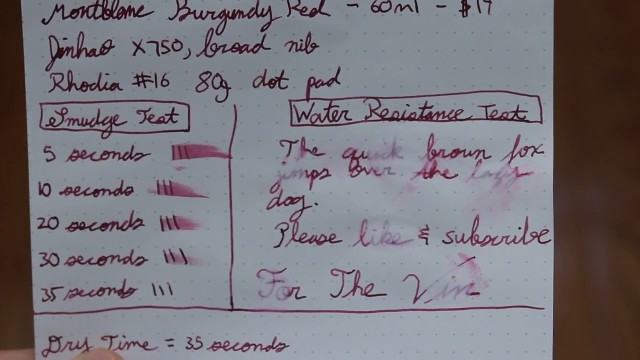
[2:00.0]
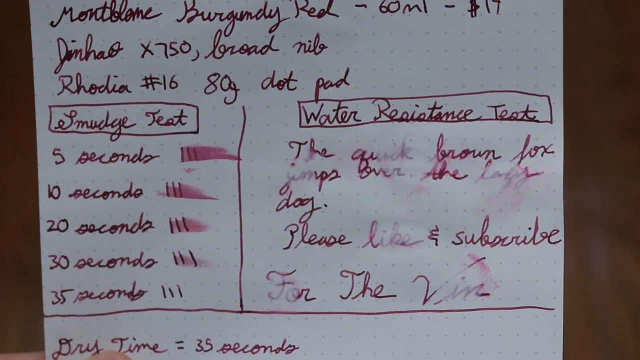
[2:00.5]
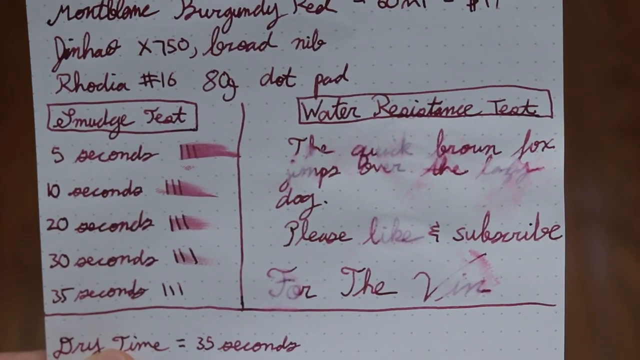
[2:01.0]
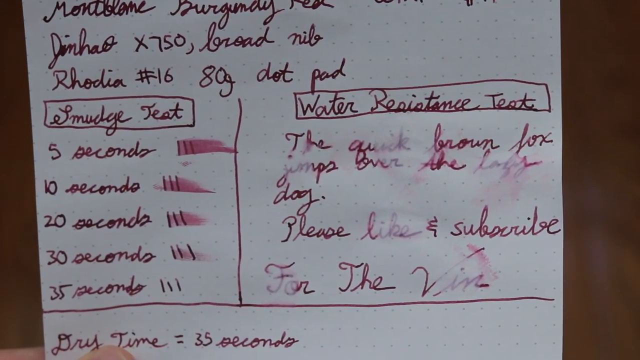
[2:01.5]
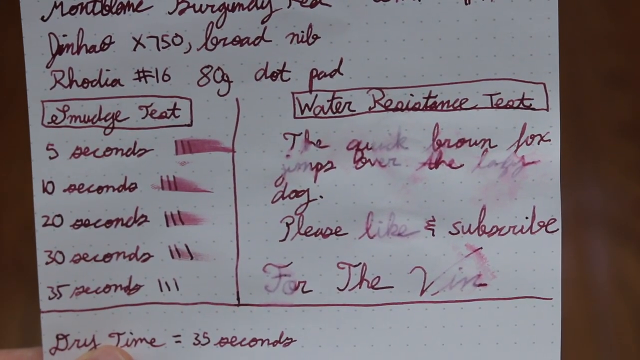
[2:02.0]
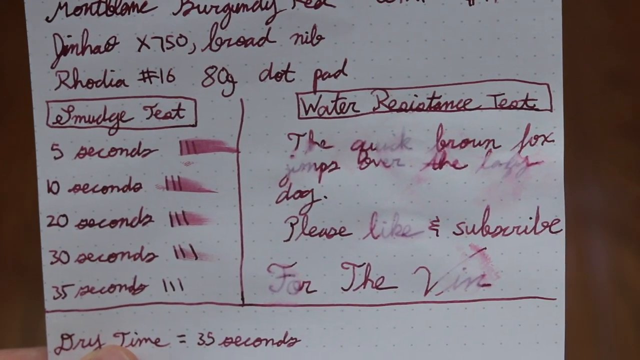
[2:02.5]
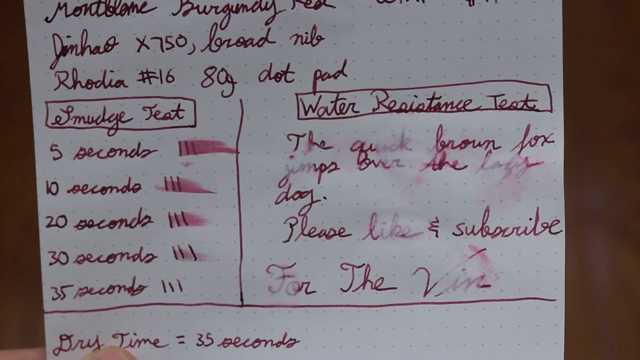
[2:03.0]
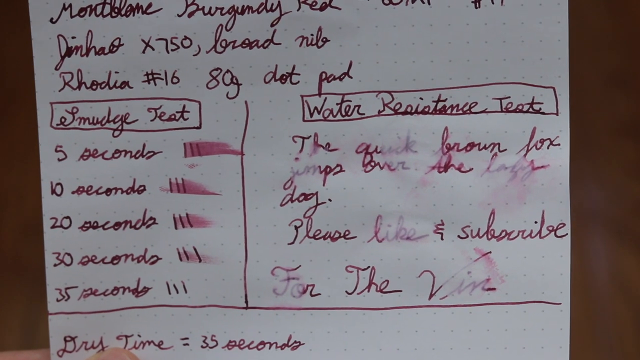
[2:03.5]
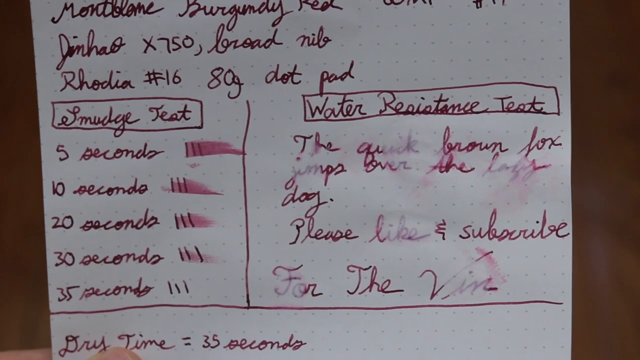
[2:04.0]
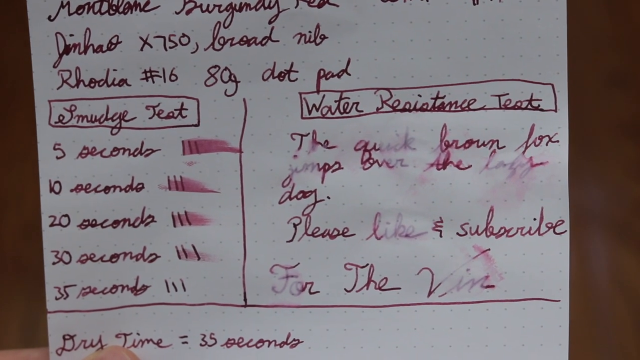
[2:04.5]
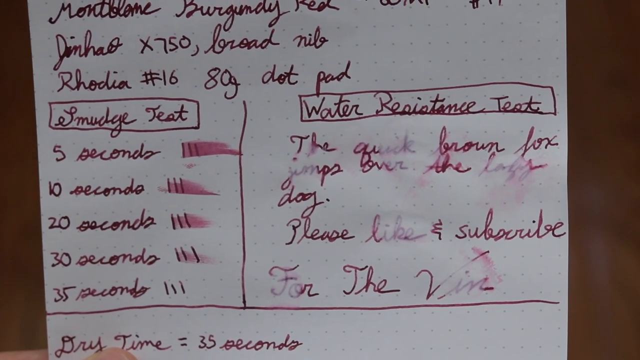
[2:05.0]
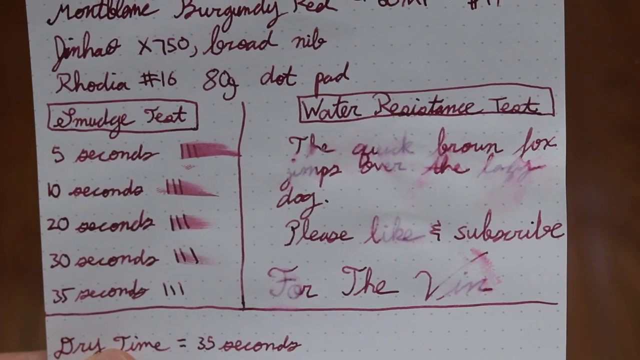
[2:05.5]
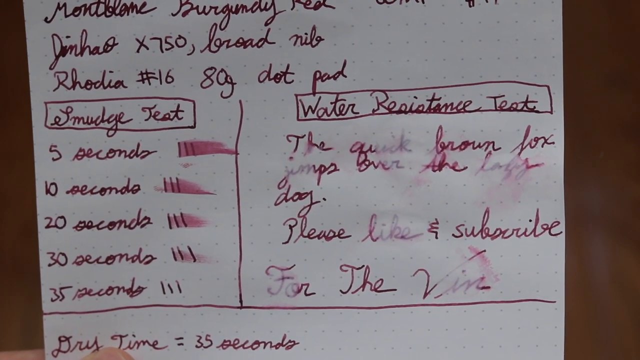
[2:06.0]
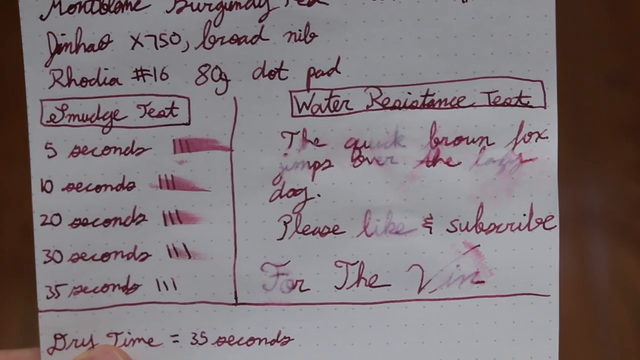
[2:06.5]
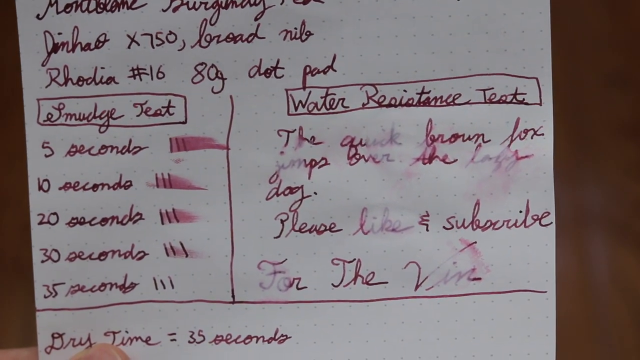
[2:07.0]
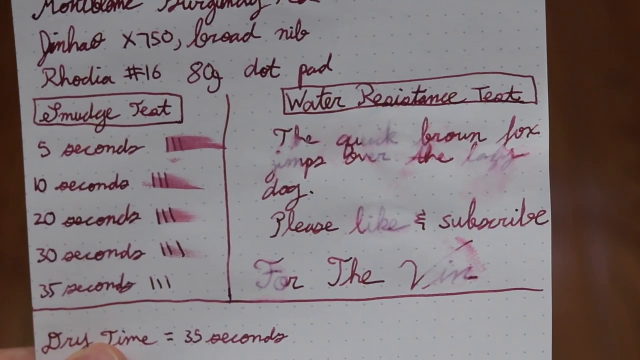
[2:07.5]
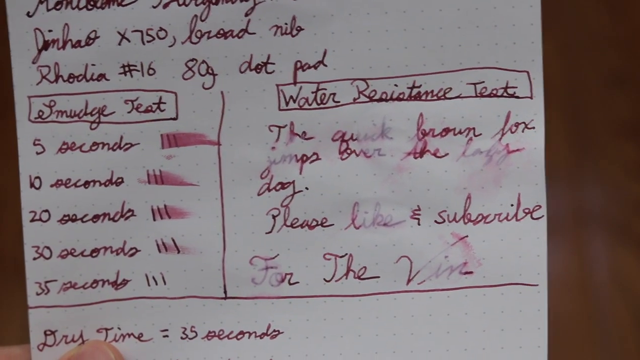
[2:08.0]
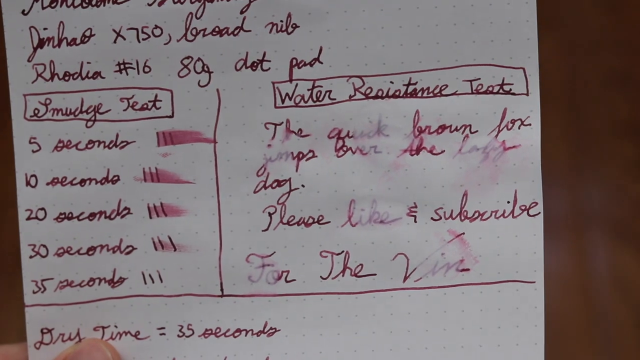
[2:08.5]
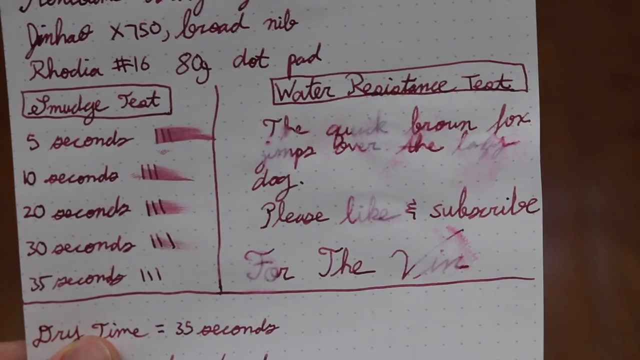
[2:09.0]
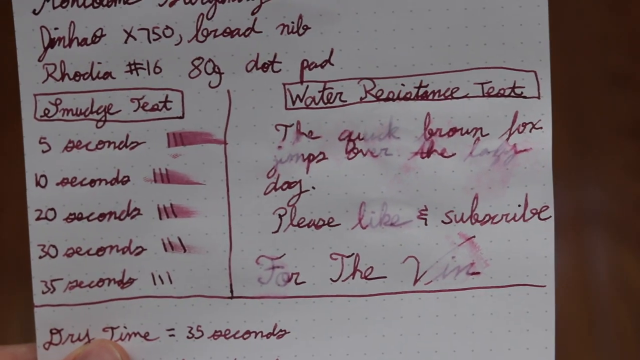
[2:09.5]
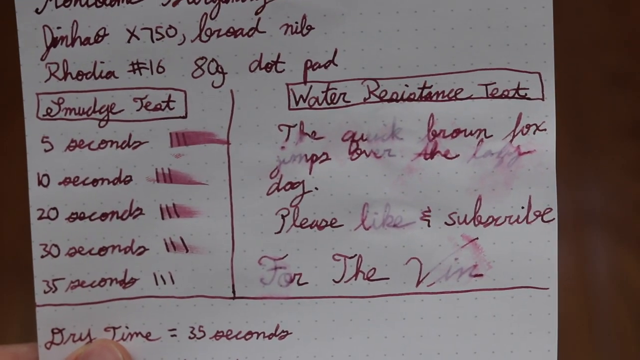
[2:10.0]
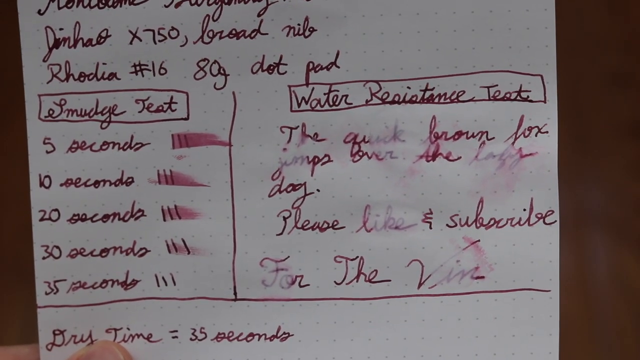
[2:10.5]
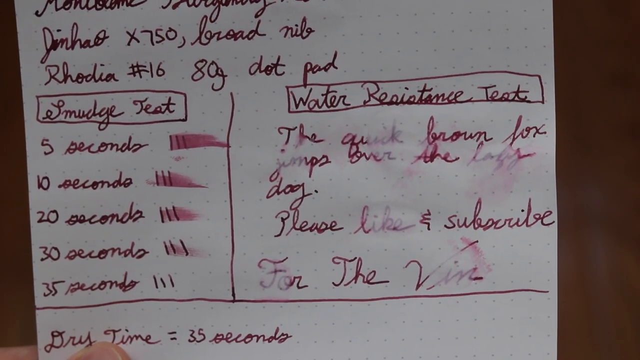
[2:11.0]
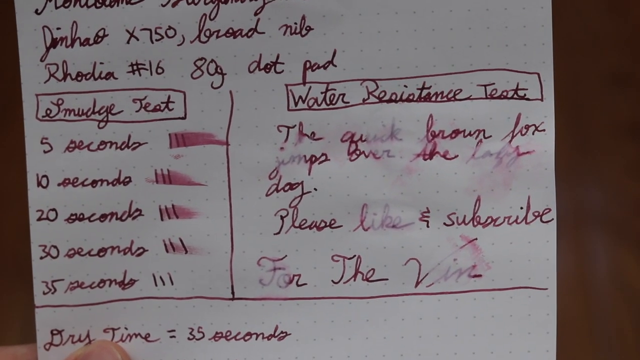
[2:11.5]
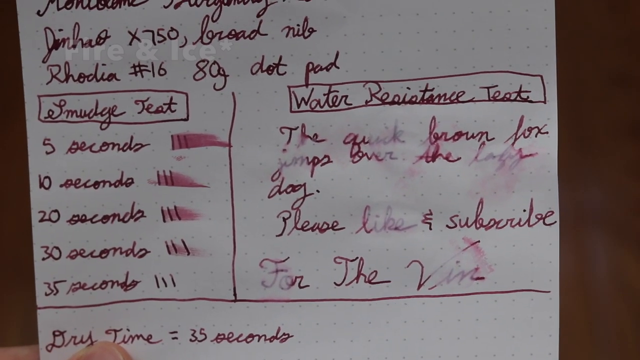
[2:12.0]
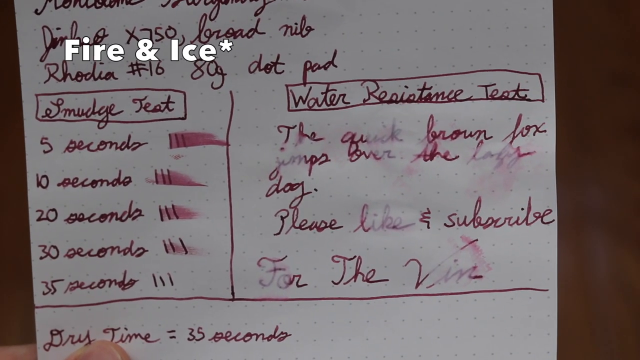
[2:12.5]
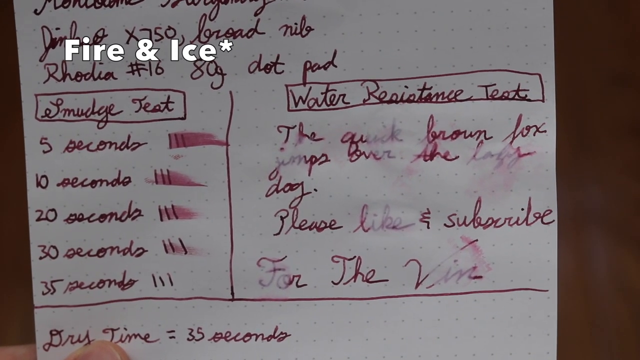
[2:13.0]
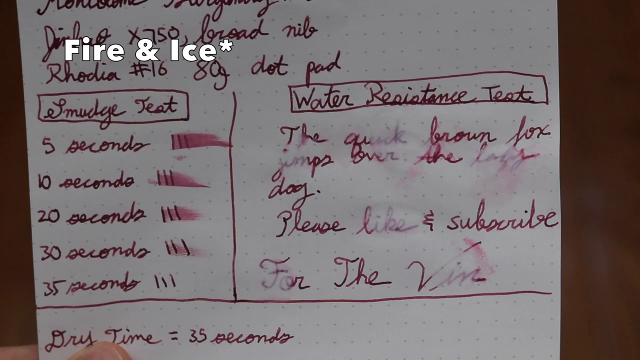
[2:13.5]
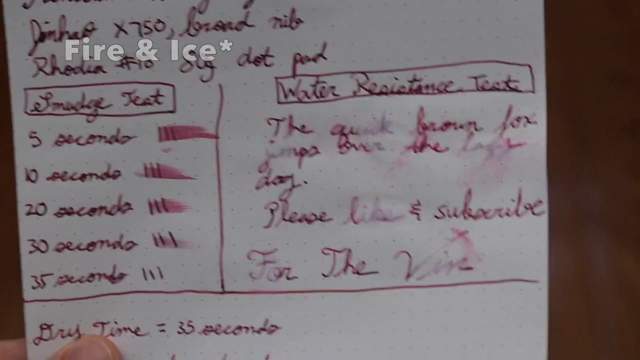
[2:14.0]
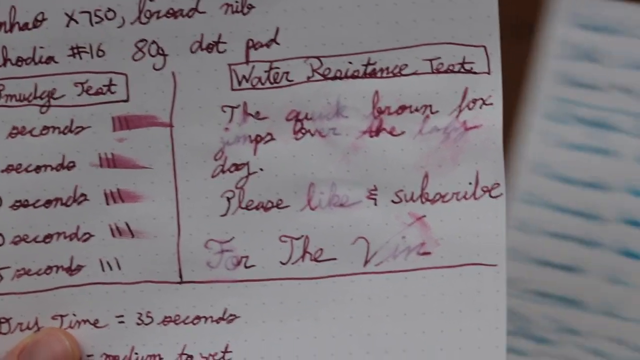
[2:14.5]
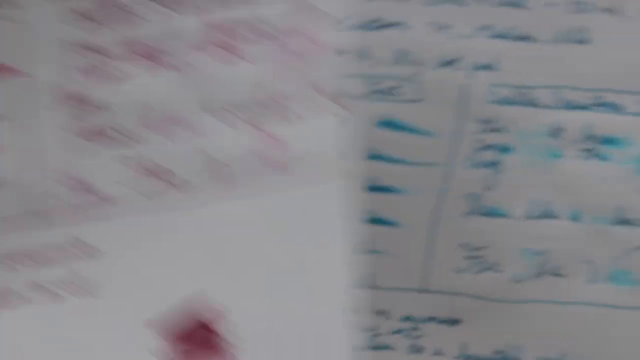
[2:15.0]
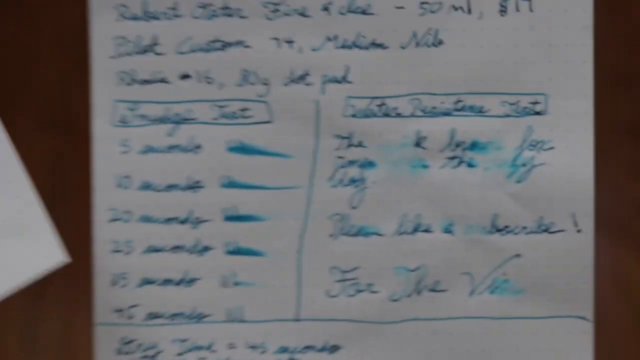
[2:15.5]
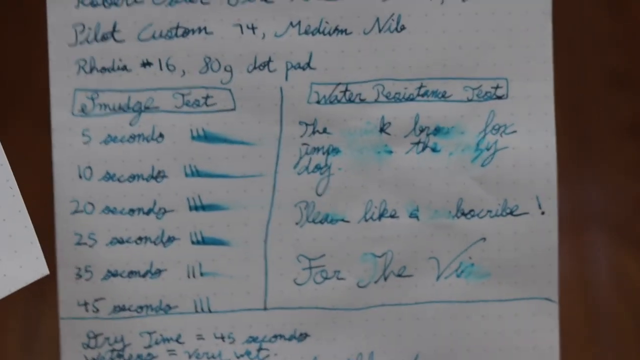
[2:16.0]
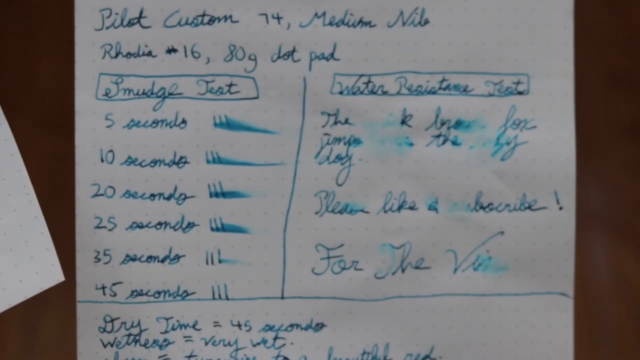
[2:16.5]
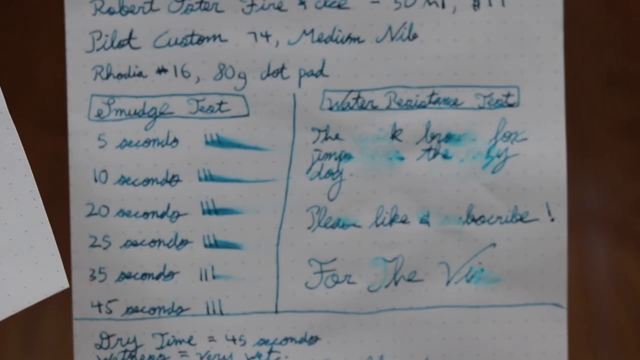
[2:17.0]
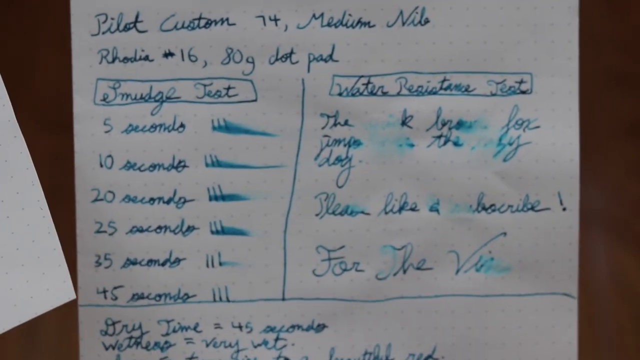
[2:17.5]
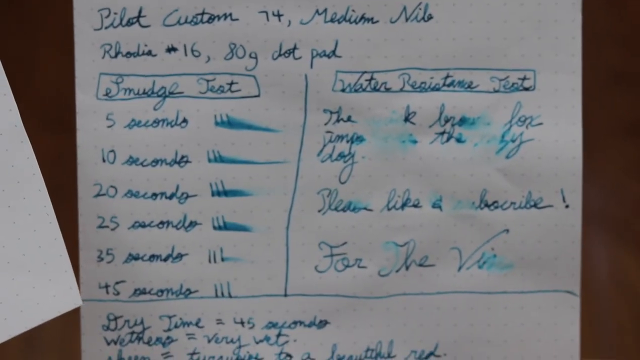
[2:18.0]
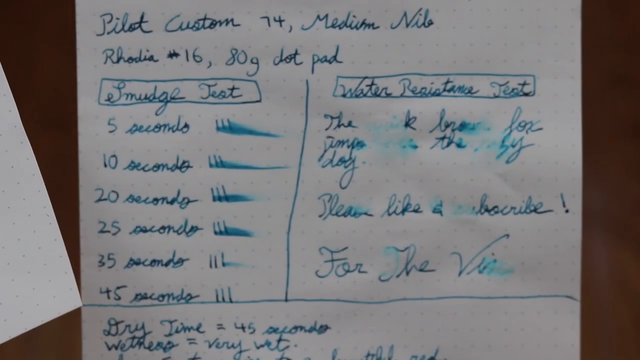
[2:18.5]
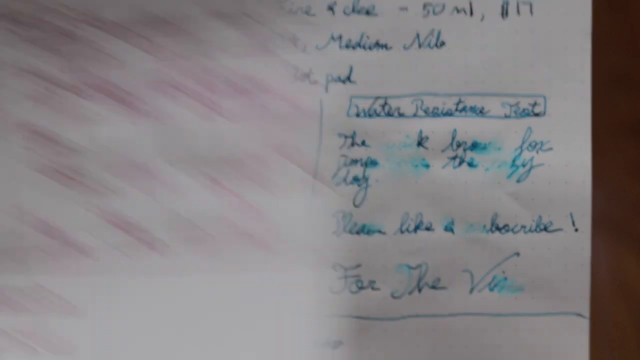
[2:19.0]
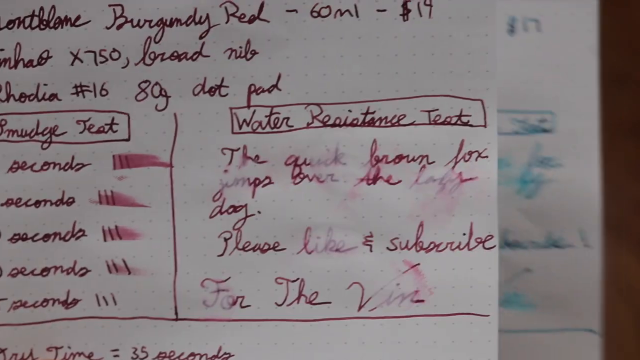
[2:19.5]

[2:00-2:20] Much of the same paper is shown, held in front of the camera by the presenter for about twelve seconds. Then the words "Fire and Ice" with an asterisk appear in the upper left-hand side of the screen. With his right hand, the presenter brings another piece of paper underneath the first one and replaces it. It has identical wording, but the ink is blue. The top line cannot be read clearly in the frame; it appears that the color name has changed, but the camera moves past the paper too quickly to read it. At the bottom, "Dry time 35 seconds" is visible below the other writing. The lines "Please like and subscribe For The Vin" are written on both papers.